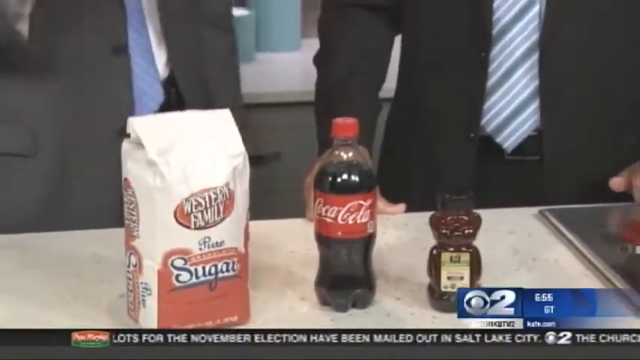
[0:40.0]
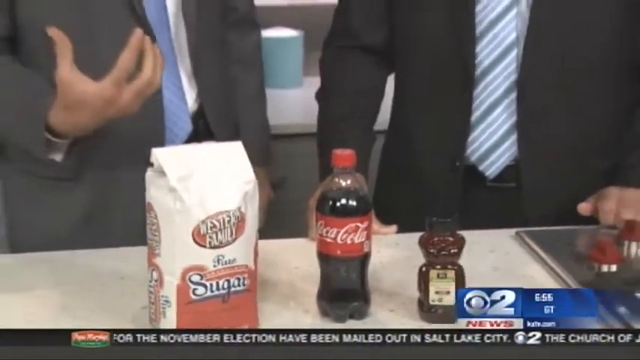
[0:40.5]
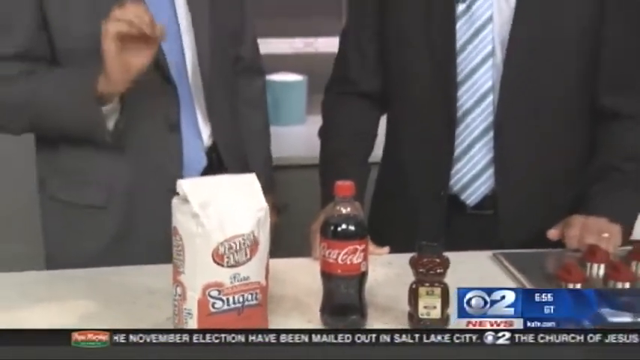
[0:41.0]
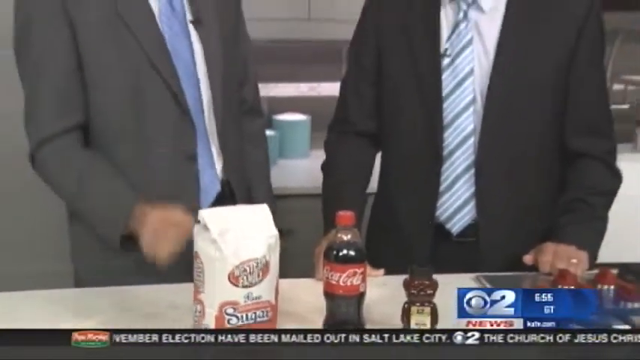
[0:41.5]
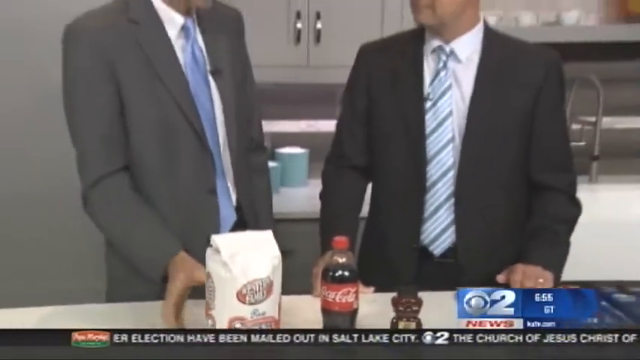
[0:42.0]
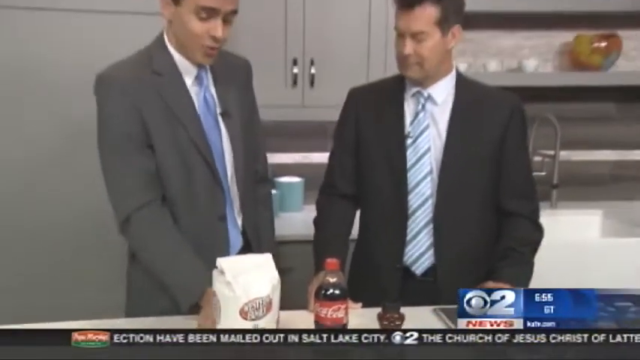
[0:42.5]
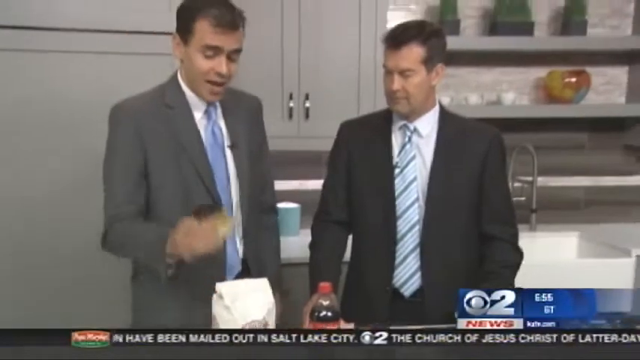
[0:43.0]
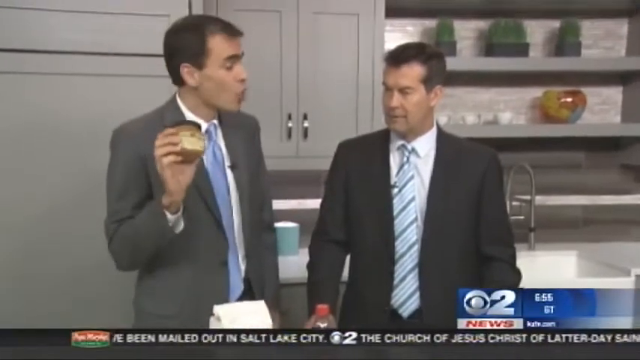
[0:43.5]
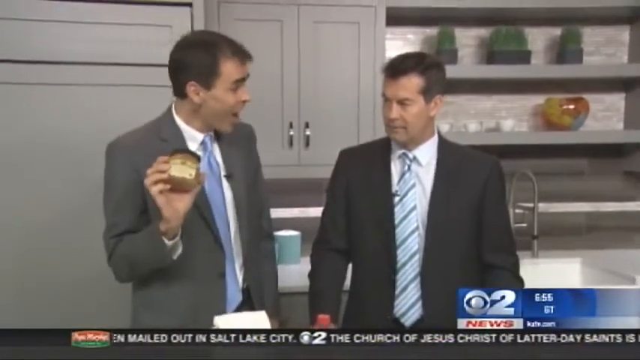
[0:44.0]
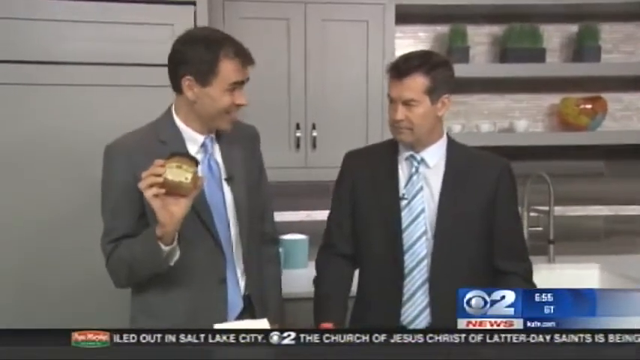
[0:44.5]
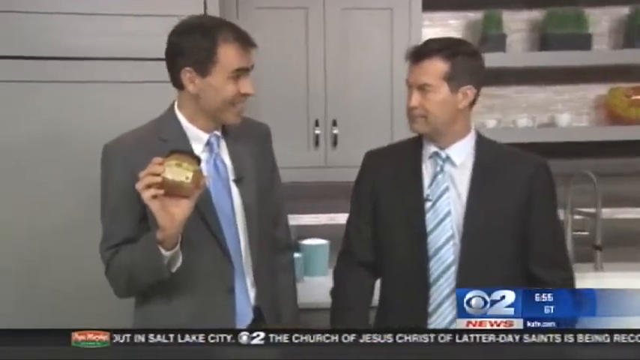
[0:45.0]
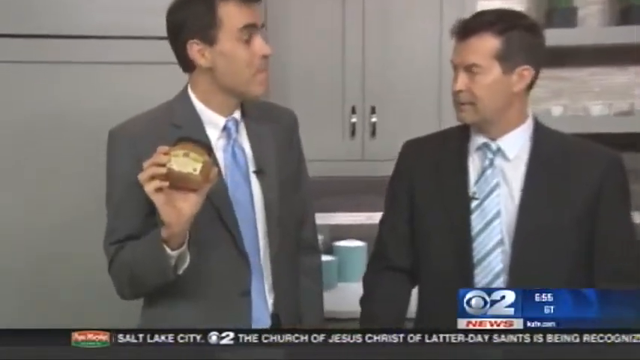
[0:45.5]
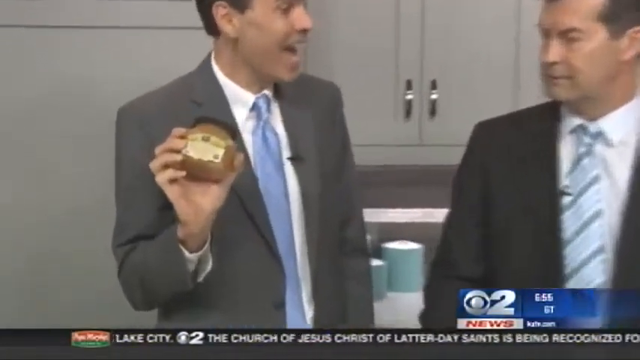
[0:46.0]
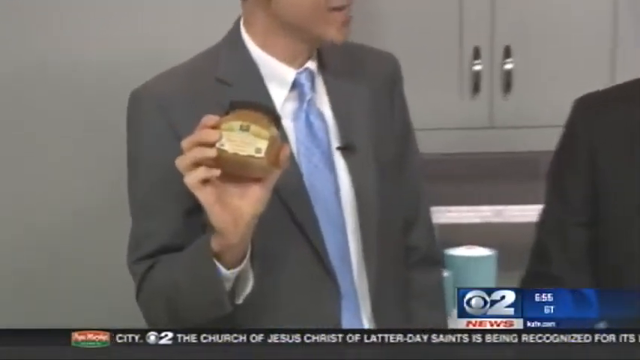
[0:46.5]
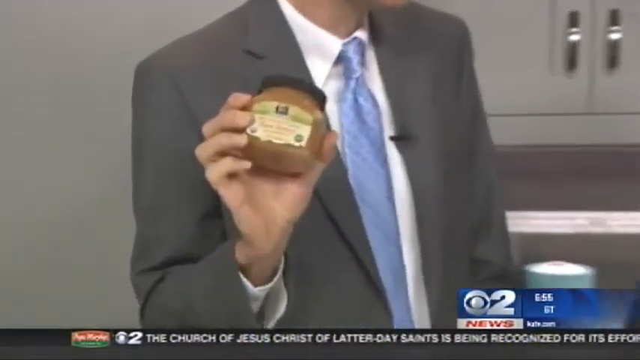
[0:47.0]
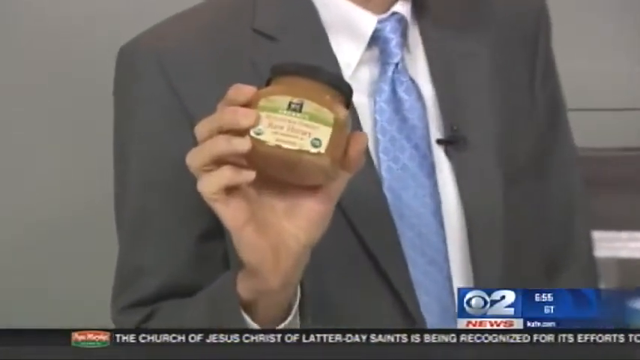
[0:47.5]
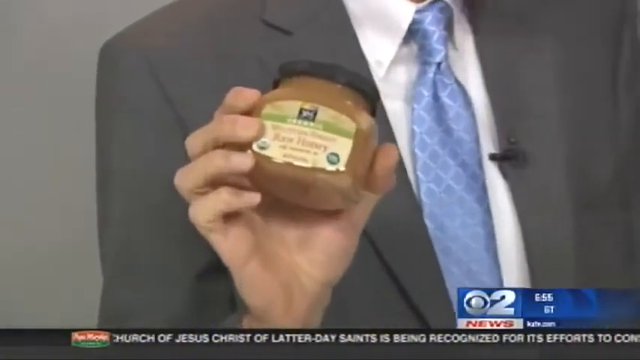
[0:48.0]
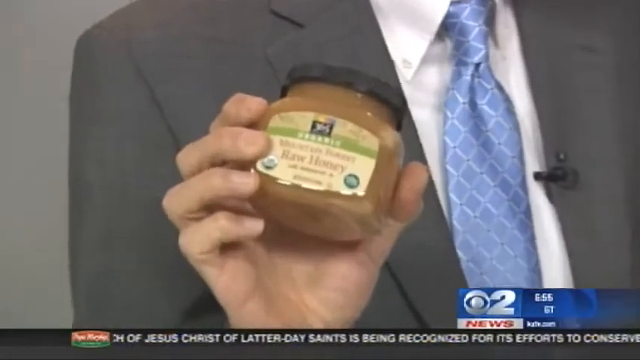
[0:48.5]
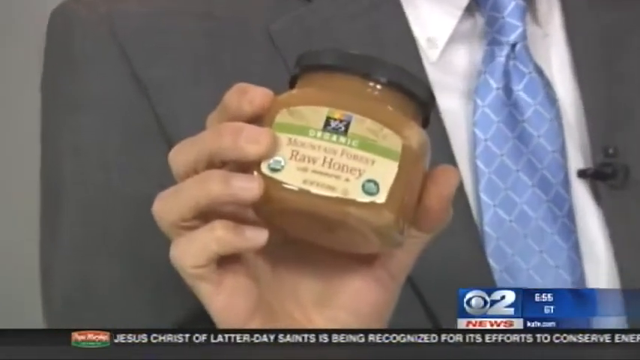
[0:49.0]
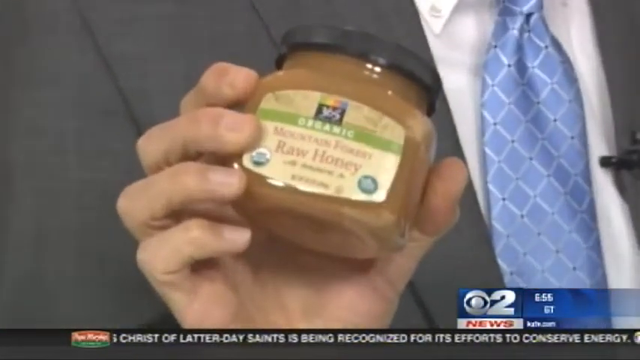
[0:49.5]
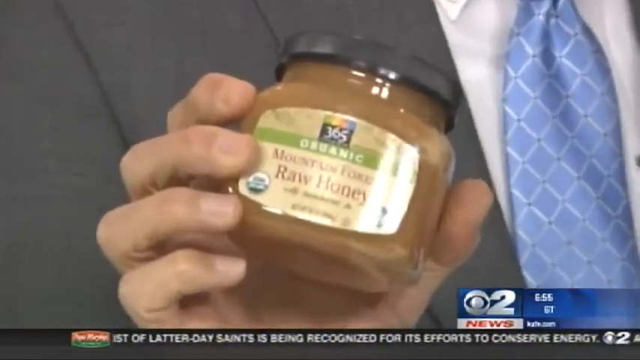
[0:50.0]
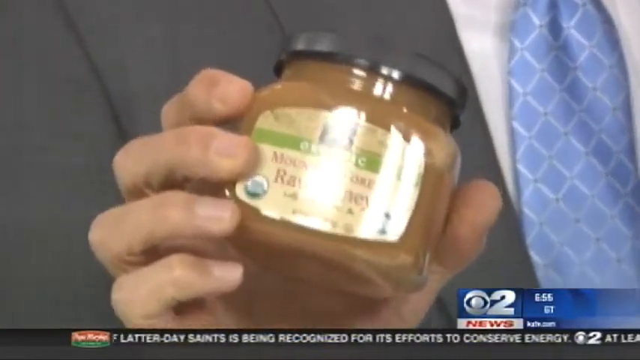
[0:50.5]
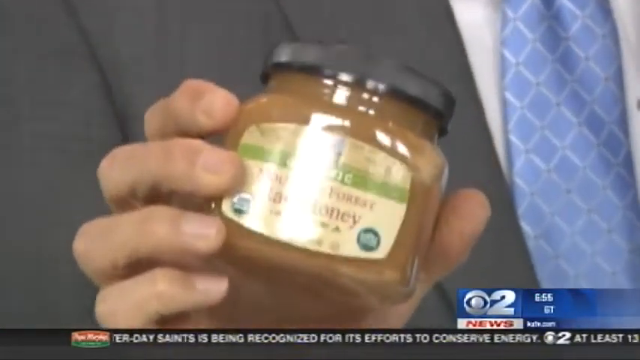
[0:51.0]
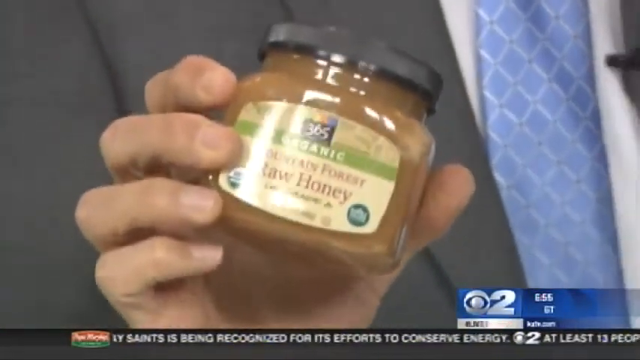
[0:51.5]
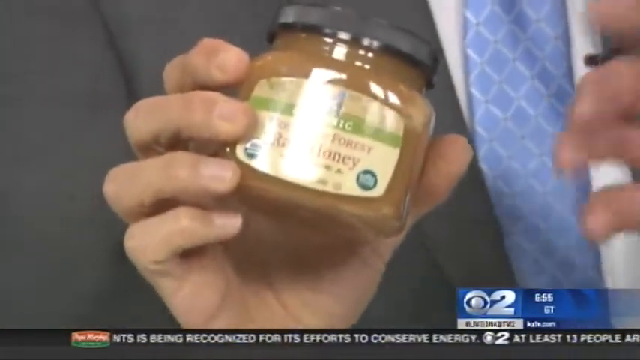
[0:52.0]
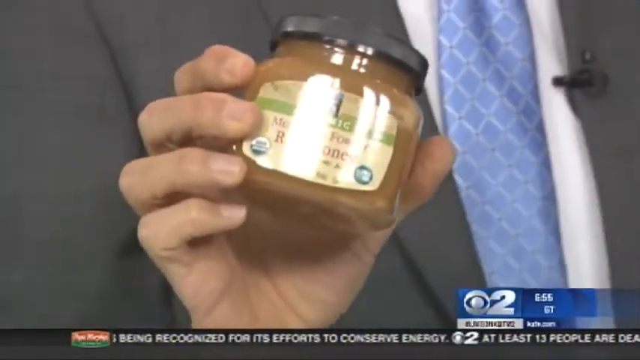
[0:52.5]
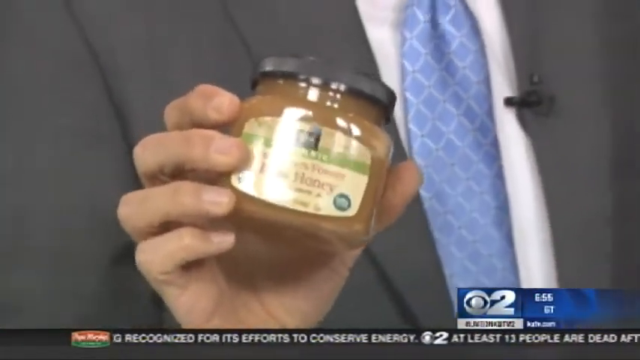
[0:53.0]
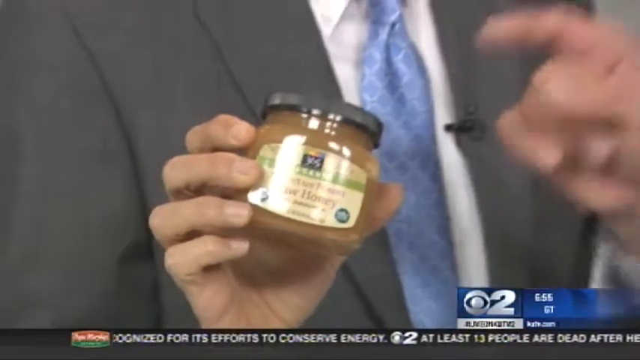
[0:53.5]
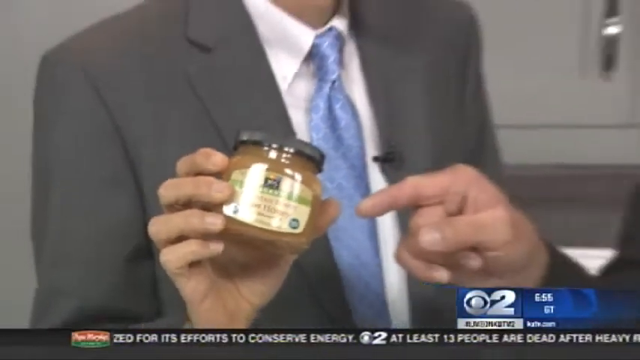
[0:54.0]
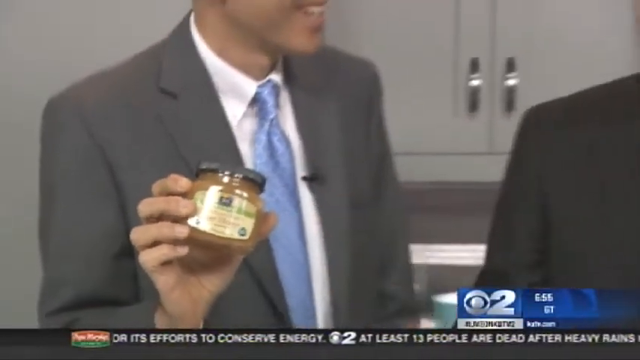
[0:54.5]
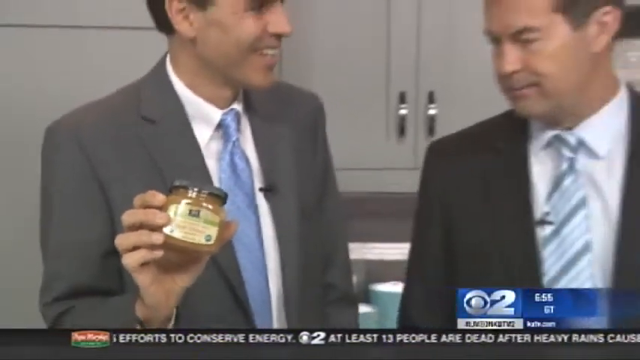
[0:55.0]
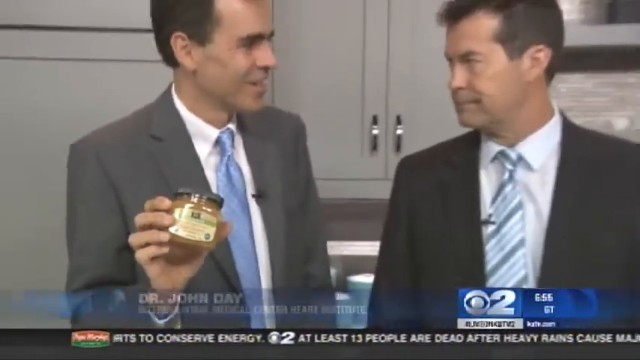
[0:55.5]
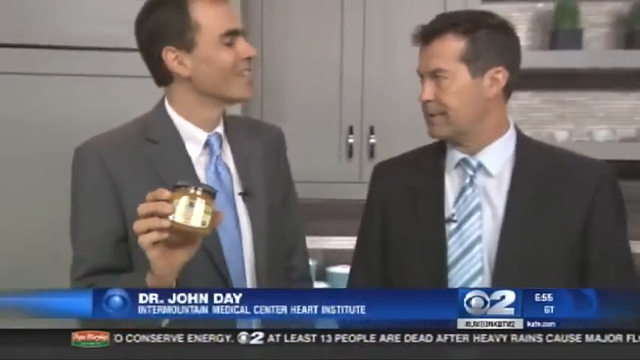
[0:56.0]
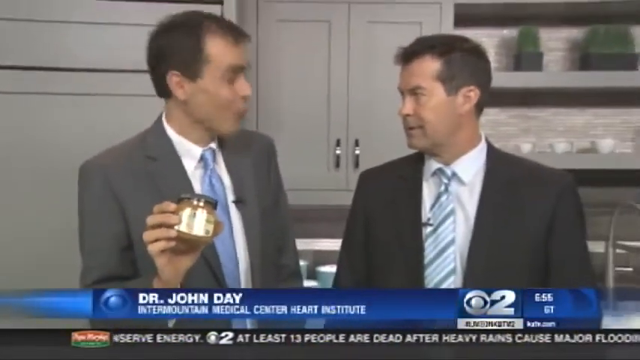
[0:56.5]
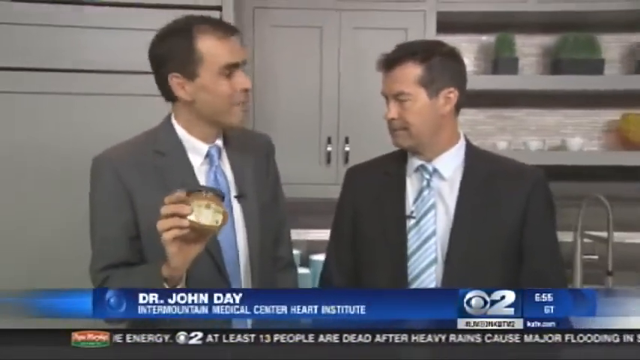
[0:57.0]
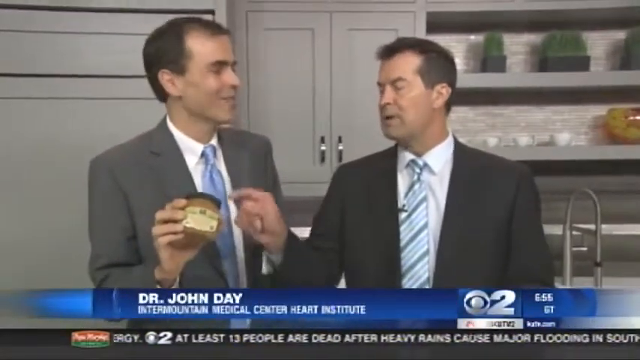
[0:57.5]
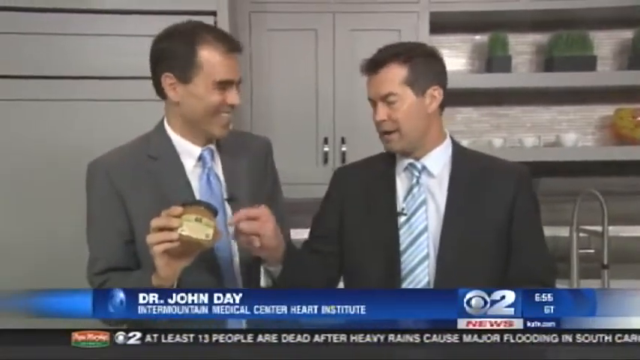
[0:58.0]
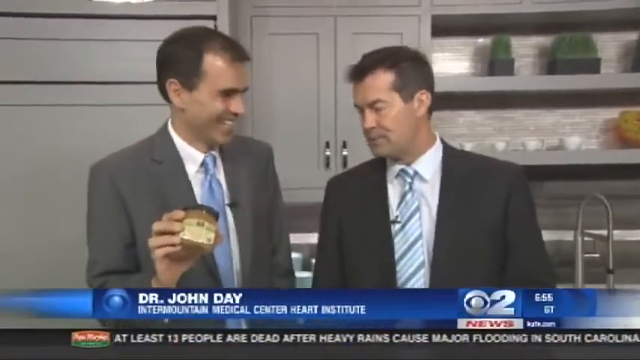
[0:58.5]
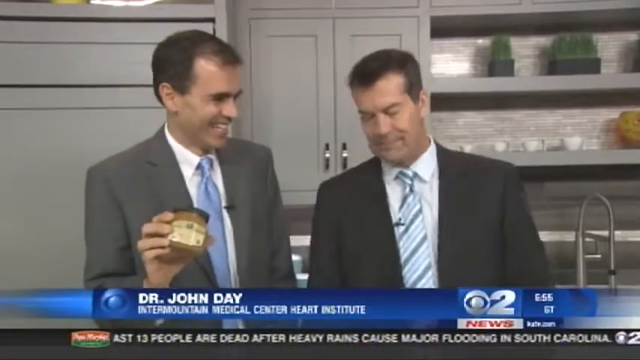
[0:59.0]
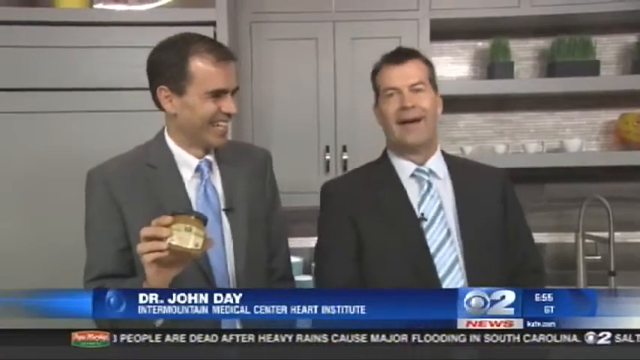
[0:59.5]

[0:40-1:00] A close-up shot of a countertop focuses on three products arranged from left to right. On the left is a large white bag of sugar from the brand Western Family, with the brand name in white font on a red background inside an oval shape. In the middle is a 20-ounce plastic bottle of Coca-Cola with a red label in the middle bearing the words "Coca-Cola" in white cursive, a red cap, and a deep black liquid inside. On the right is a bottle of honey shaped like a bear, with a black cap and darker brown honey. In the bottom right is a CBS logo for Channel 2, and a news ticker runs headlines from right to left. The camera angle zooms out from the two men, and the man on the left picks up a circular jar in his right hand. The camera zooms in, showing it is a jar of organic raw honey from the brand 365, with a label reading "Mt. Ford Raw Honey". The camera stays zoomed in as the man on the right points at the container and speaks a few words, while the left man smiles at him holding up the jar of honey, then responds, nodding his head slowly.